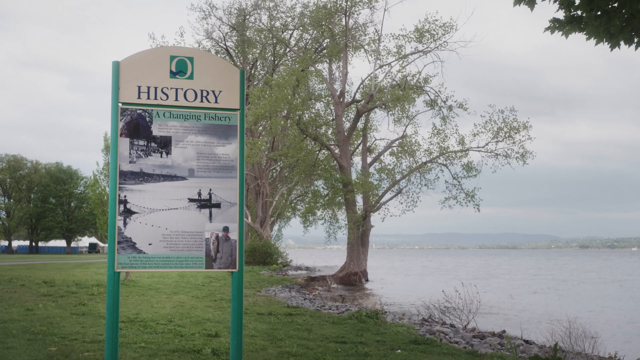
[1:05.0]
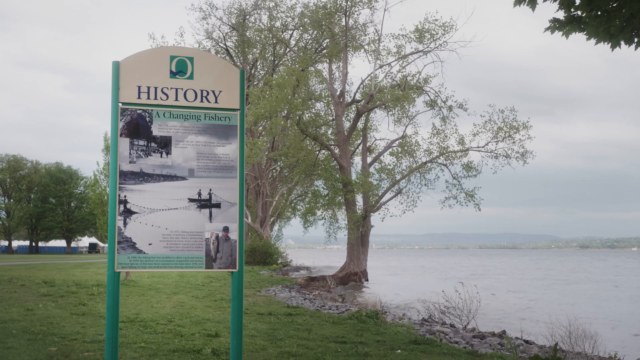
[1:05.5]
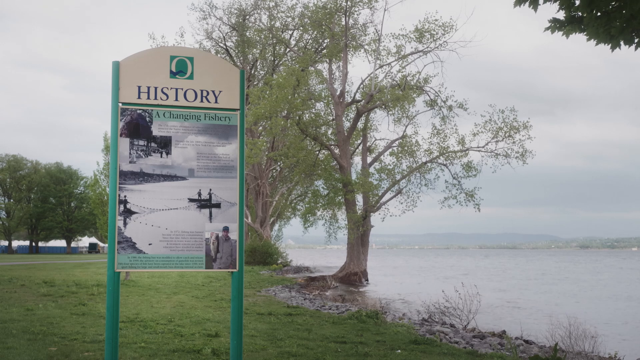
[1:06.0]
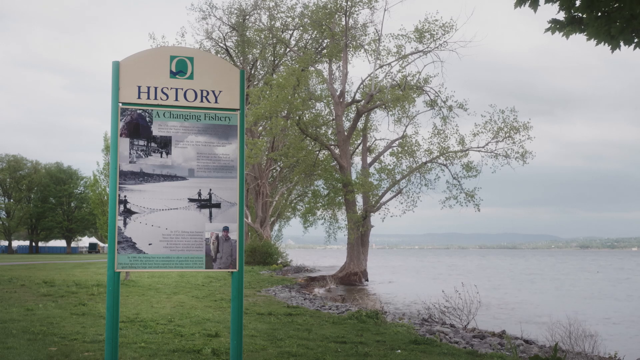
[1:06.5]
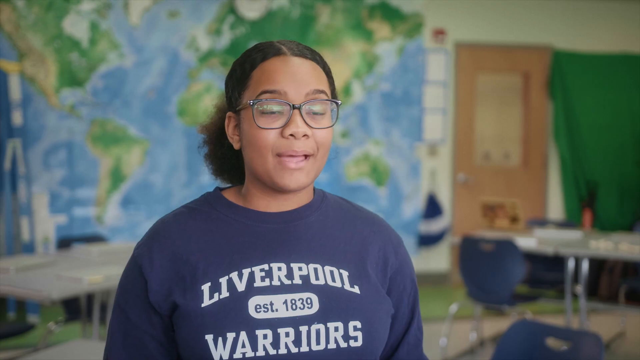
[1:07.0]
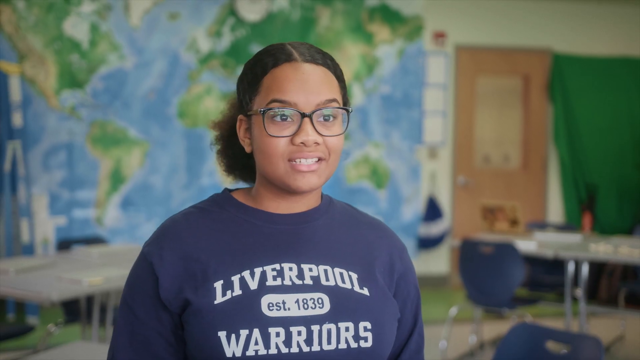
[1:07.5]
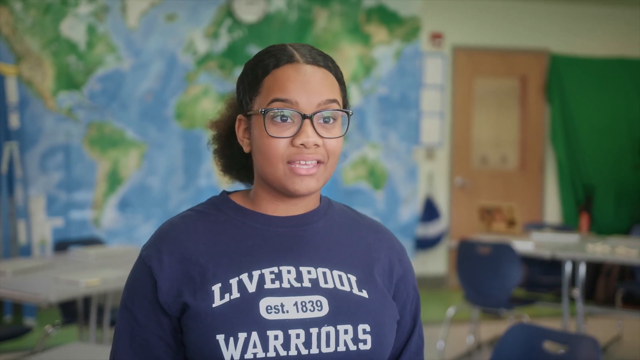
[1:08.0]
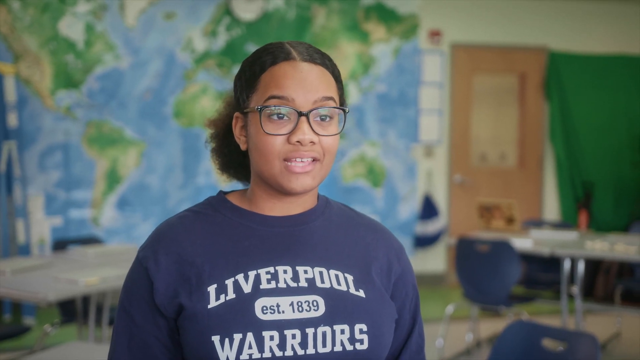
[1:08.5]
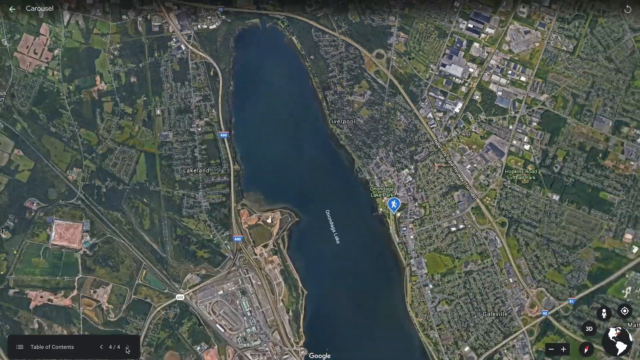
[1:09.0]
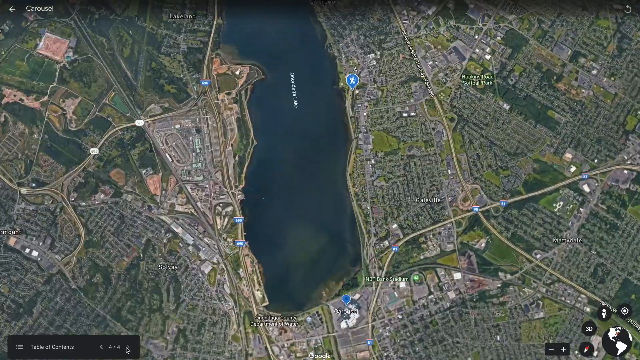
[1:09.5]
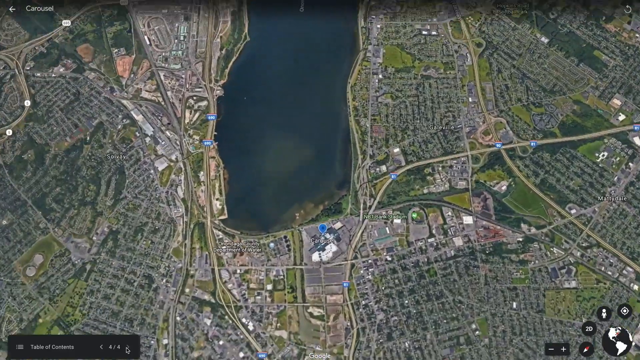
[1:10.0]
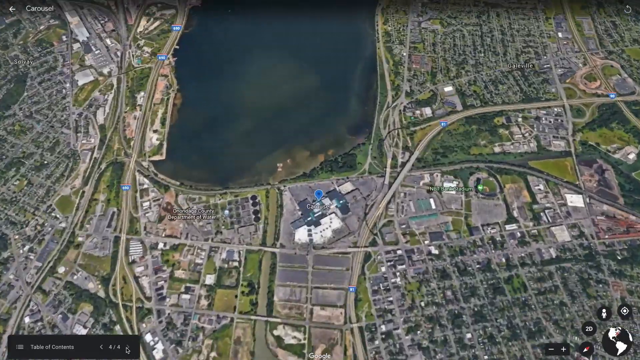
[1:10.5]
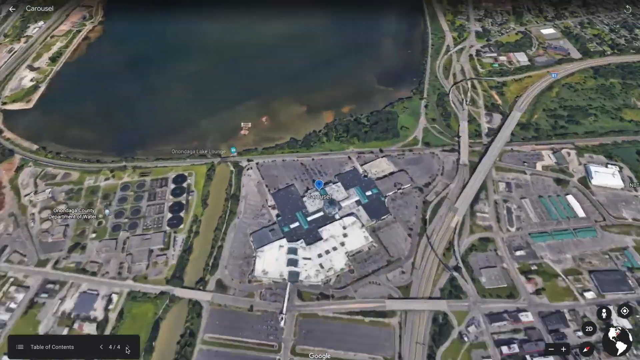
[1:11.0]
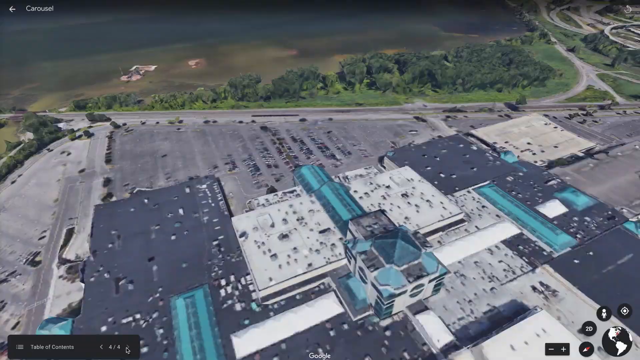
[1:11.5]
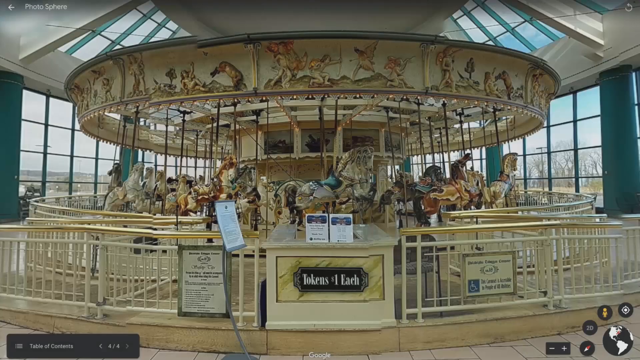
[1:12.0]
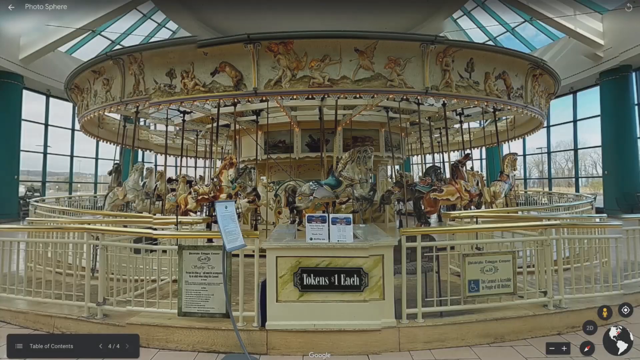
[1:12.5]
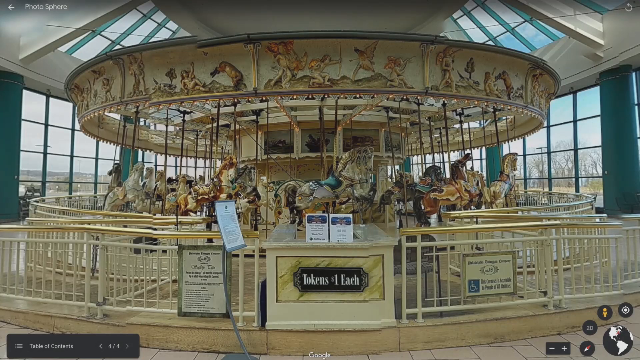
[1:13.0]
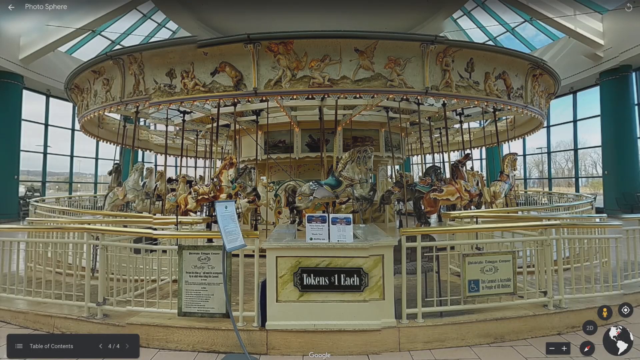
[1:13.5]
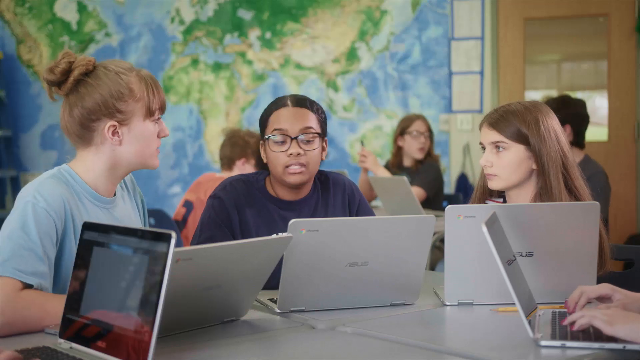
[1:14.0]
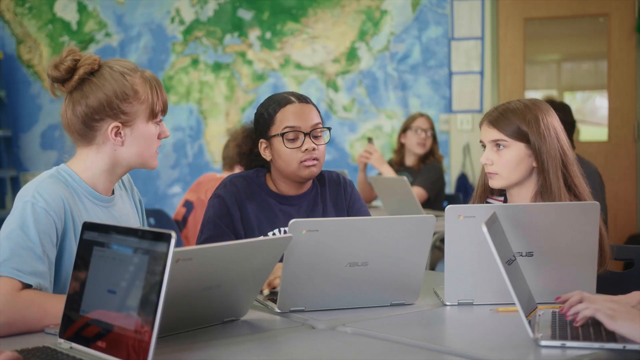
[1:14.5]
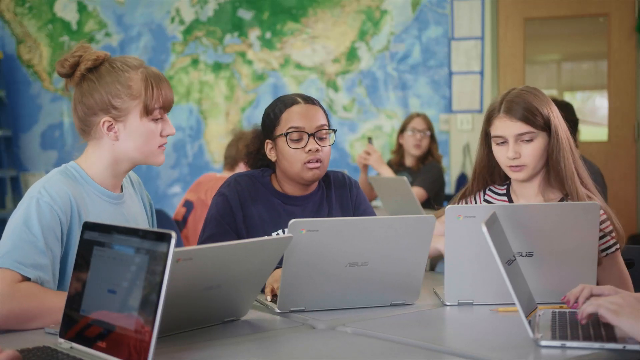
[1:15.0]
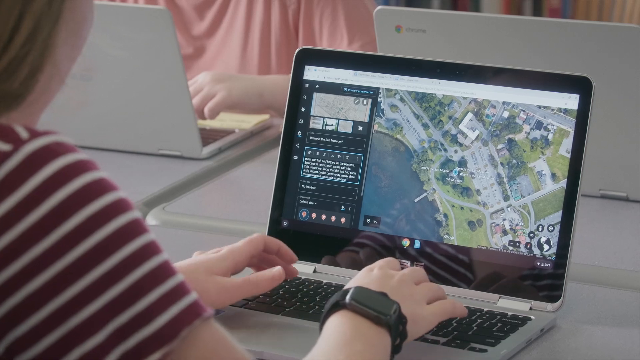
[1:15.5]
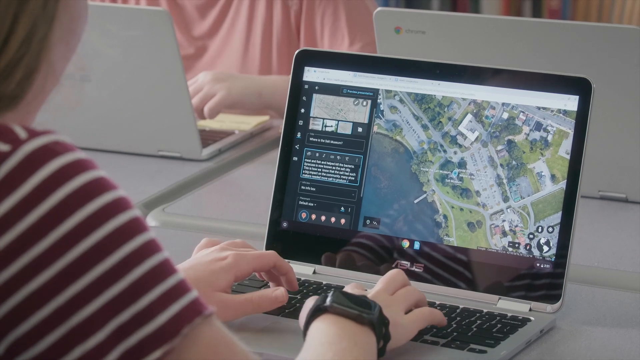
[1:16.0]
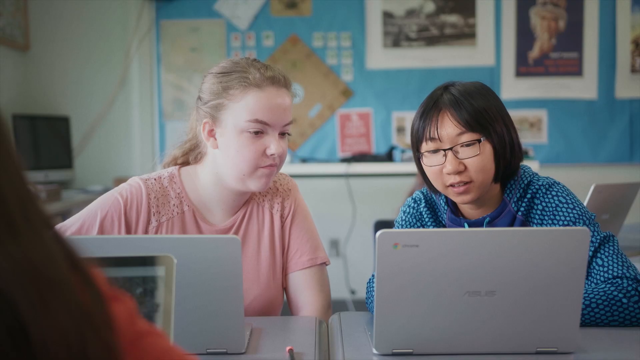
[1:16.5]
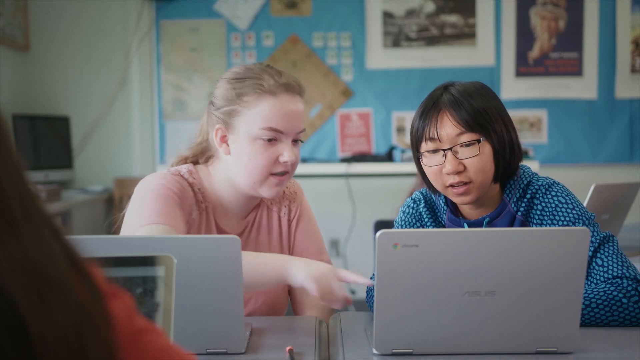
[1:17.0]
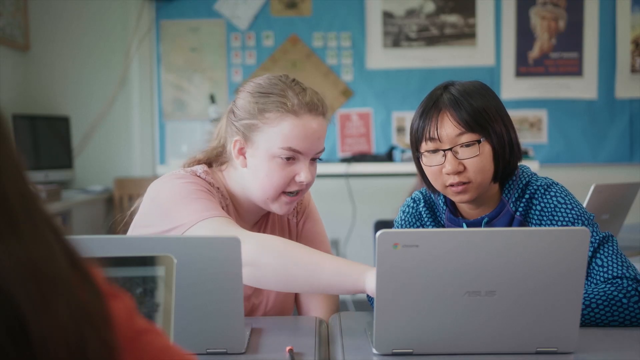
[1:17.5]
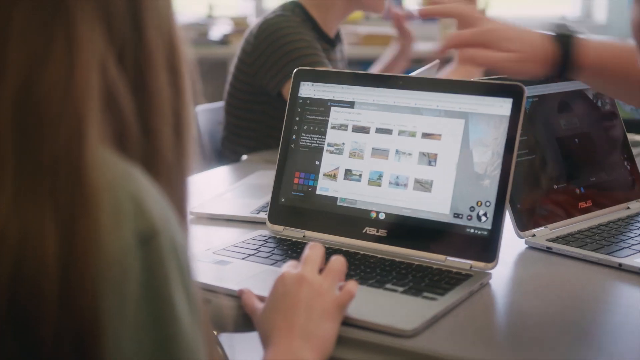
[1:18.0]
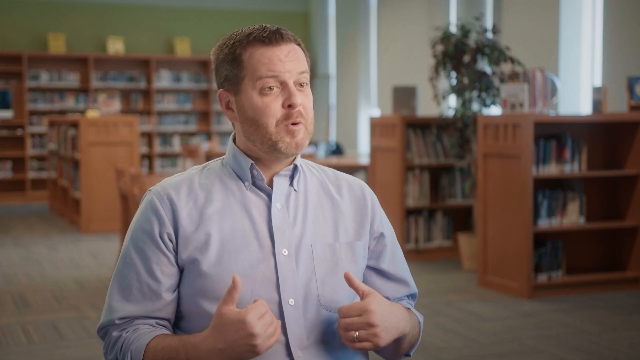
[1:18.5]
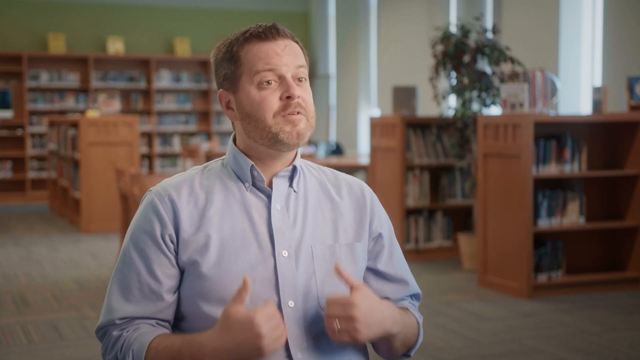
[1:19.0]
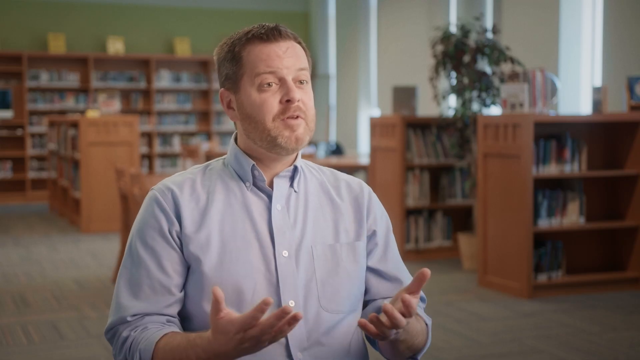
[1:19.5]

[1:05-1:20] A white post with the title "history" flashes on screen; underneath the title it says "a changing fishery". It is alongside a river or lake. Next, a young junior high schooler, maybe age 11 to 12, wearing glasses and a blue shirt that says "Liverpool Warriors est 1839", speaks to the camera with a classroom in the background. The next scene shows a topography of a lake or ocean with surrounding land, maybe even buildings, and then zooms into a specific location showing a merry-go-round that looks like it could be within a museum. It is a carousel, and the gate says "tokens $1 each". Many other junior high school students are then shown speaking: at least three students, with four students in the background. Two students work together, pointing at a laptop screen. The scene ends with an interview with a man, possibly the teacher, who looks to be about in his 40s and wears a button-down shirt, speaking to the camera in what looks like a school library.